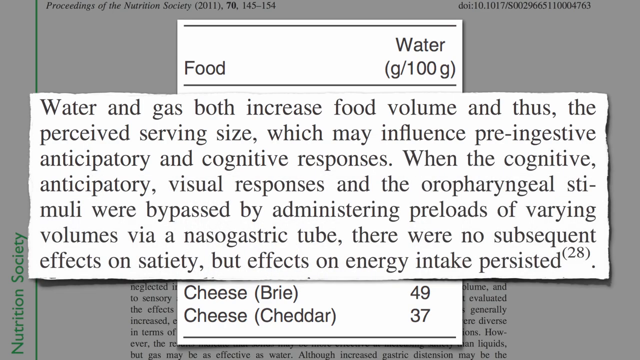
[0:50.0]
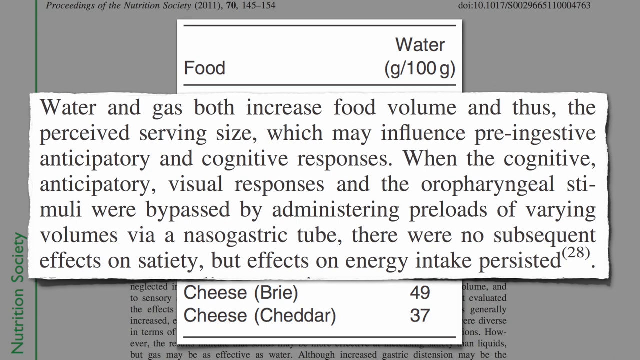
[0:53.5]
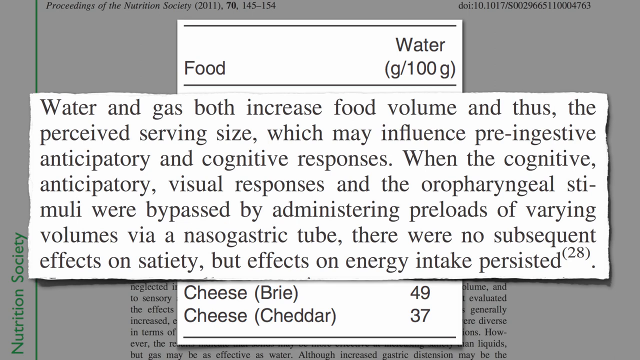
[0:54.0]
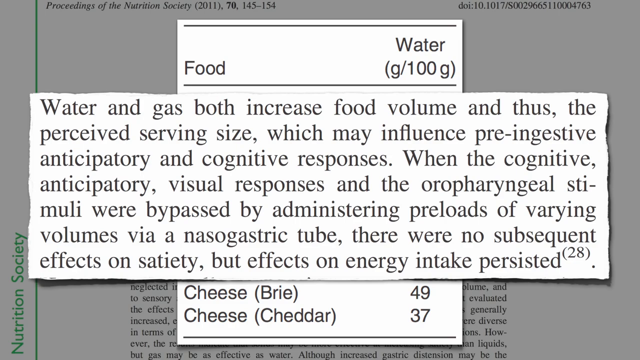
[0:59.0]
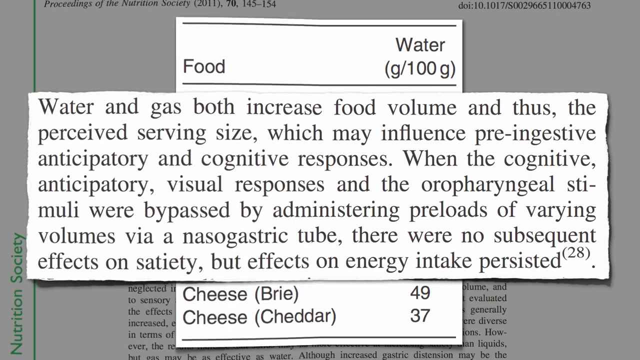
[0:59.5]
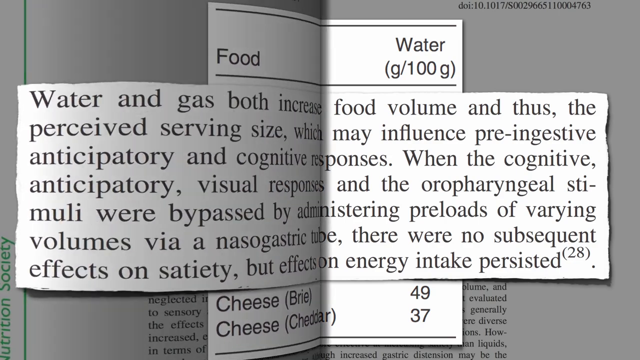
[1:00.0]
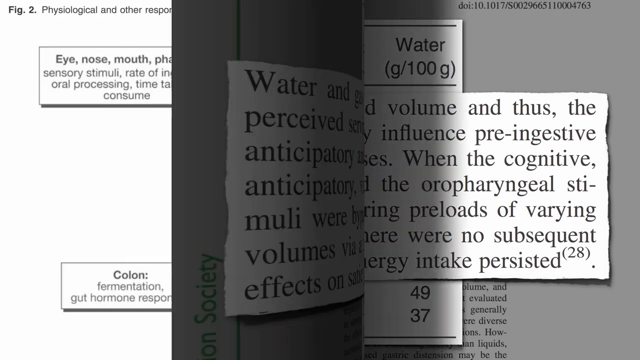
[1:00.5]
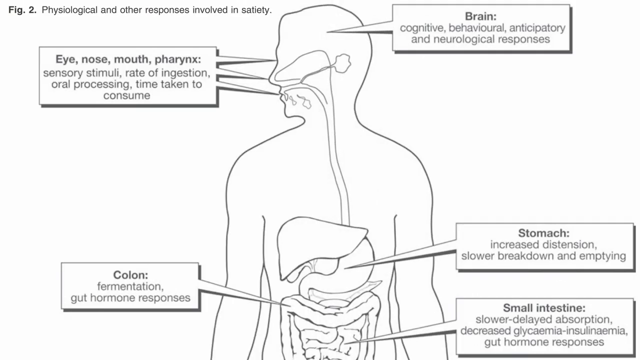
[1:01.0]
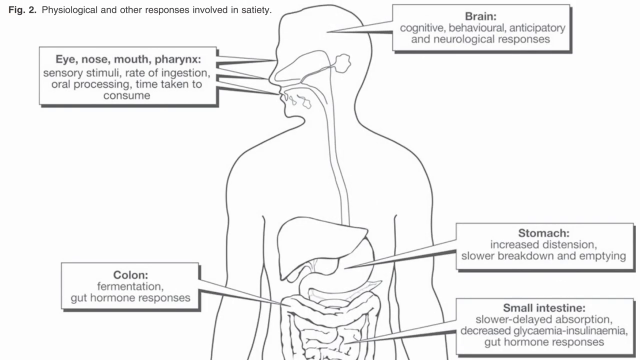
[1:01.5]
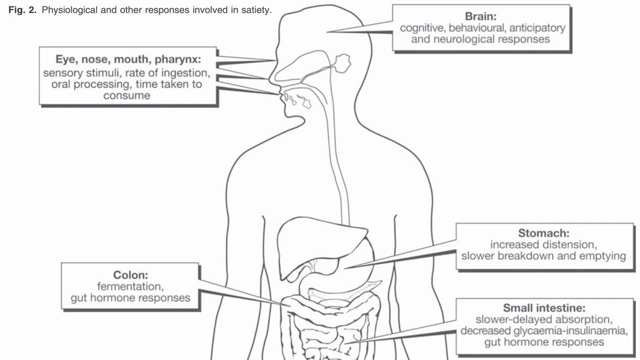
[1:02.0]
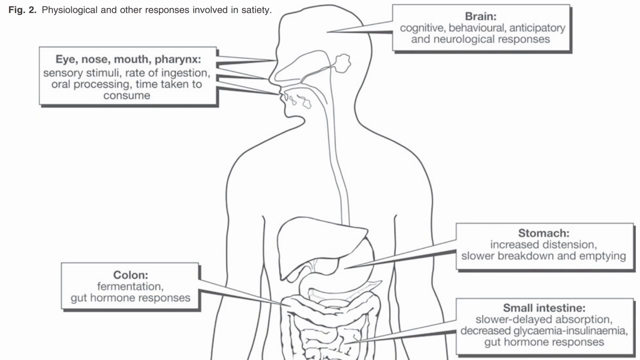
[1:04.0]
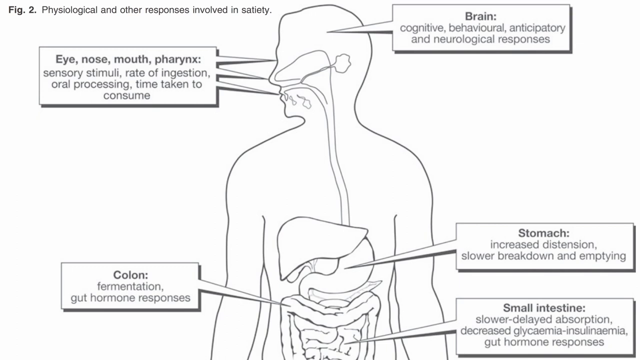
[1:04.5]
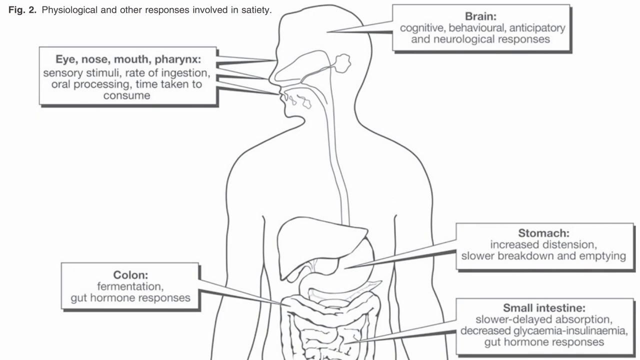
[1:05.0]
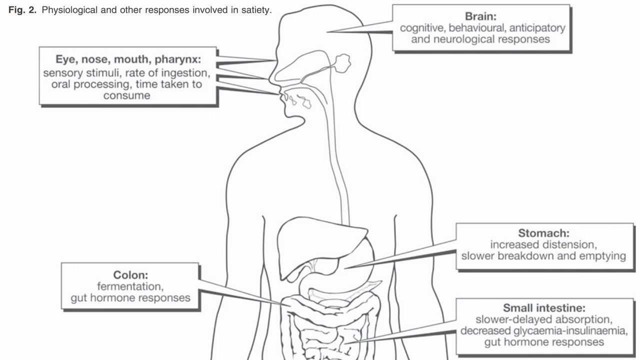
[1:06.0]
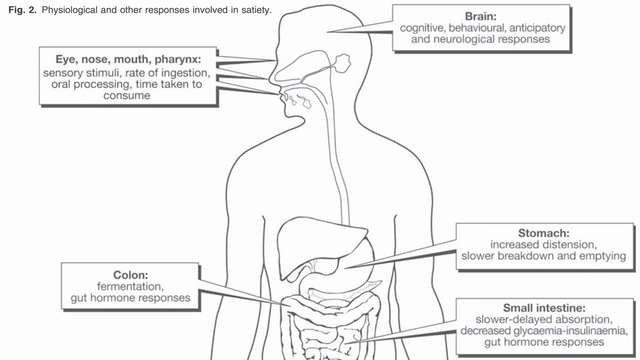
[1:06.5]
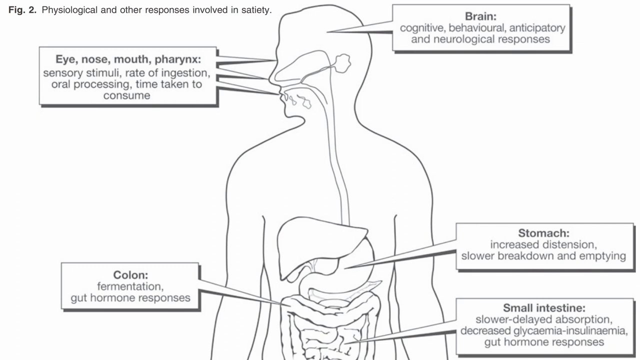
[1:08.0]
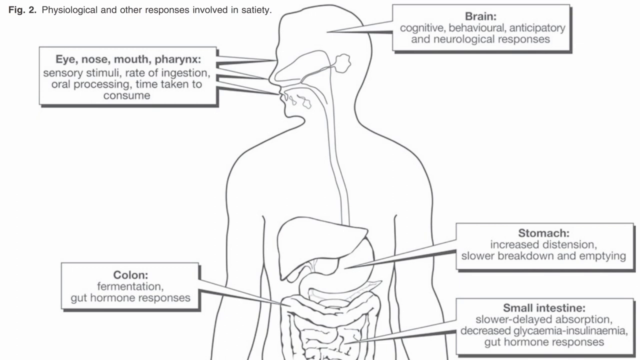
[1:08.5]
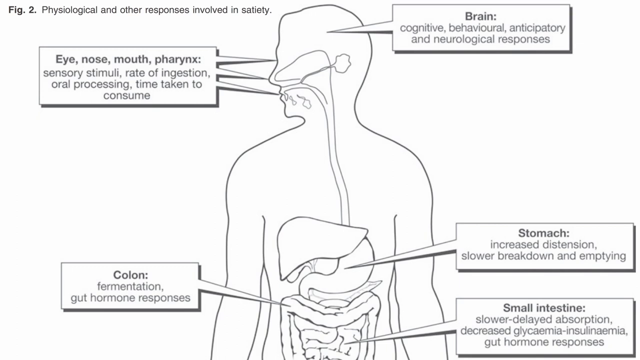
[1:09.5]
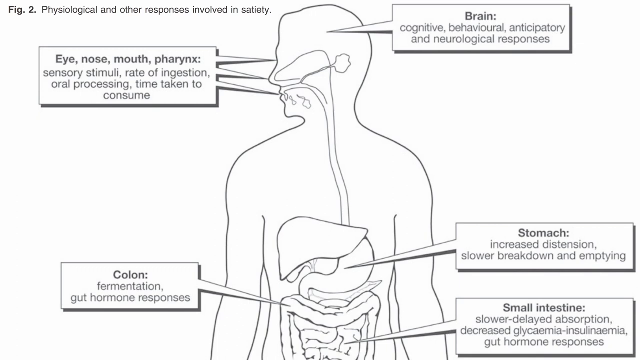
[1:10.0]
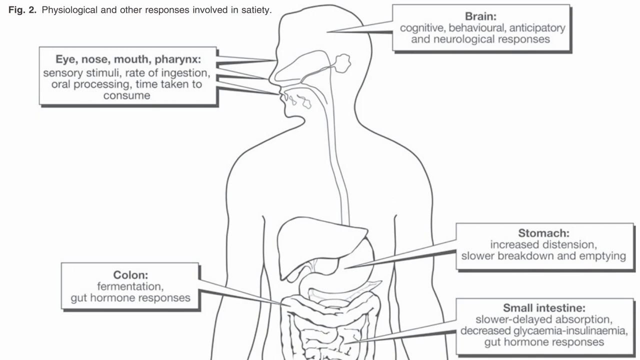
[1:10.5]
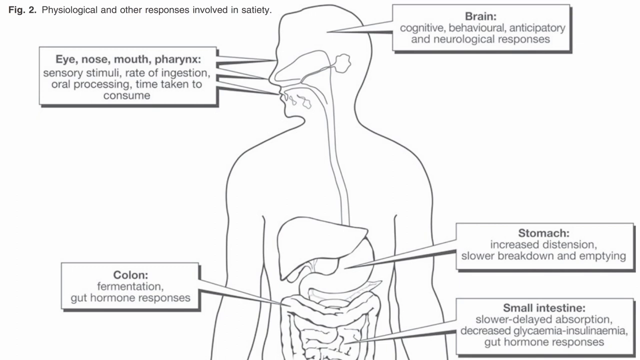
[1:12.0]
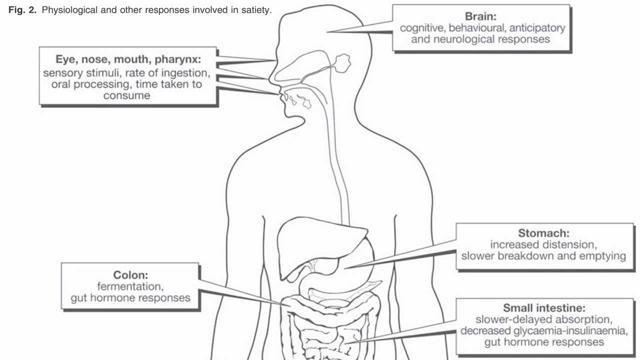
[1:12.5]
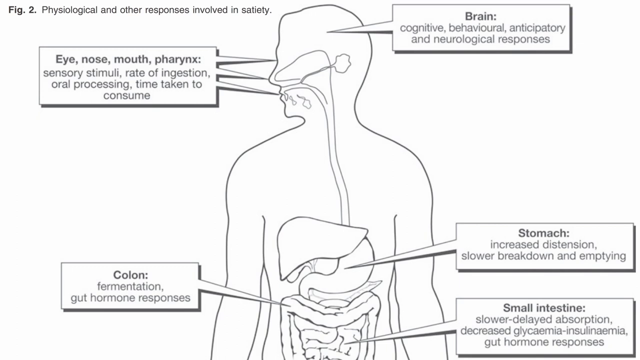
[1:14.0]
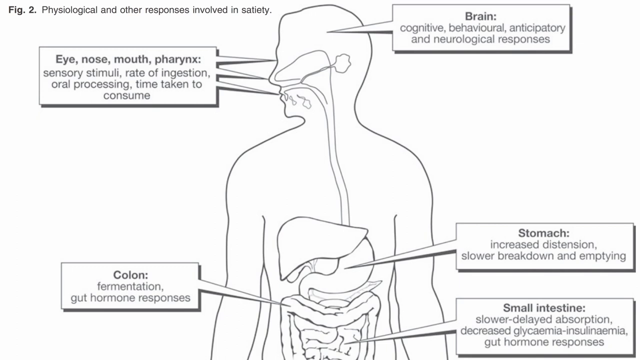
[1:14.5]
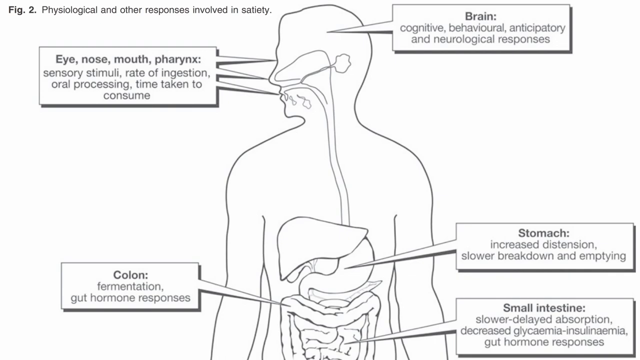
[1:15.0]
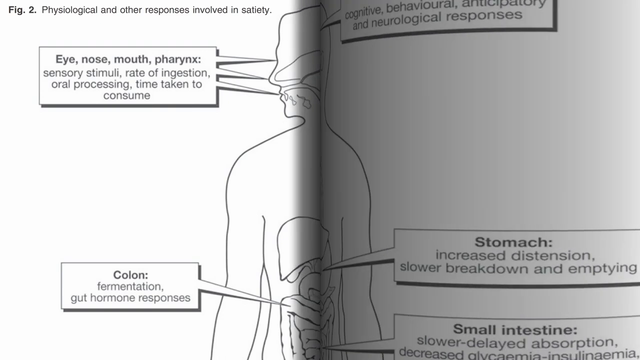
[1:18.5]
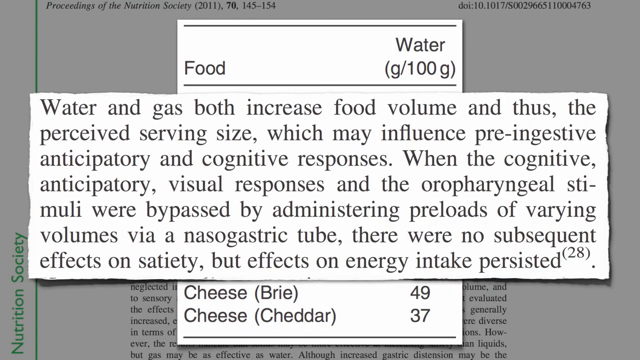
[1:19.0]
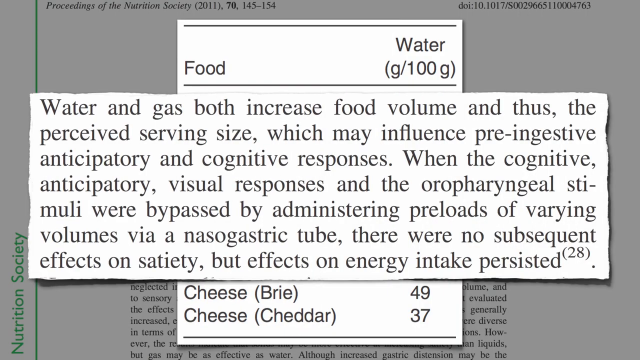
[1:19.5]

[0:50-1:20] Black text on a white background reads: "water and gas both increase food volume and thus the perceived serving size, which may influence pre-ingestive anticipatory and cognitive responses. When the cognitive anticipatory visual responses and oropharyngeal stimuli were bypassed by administering preloads of varying volumes by a nasal gastric tube, there were no subsequent effects on satiety, but effects on energy intake persisted." The screen then changes to an illustration of a human showing their insides, with a stomach, intestines and a few other organs visible. At the top right, next to the head, a bubble reads "Brain, Cognitive, Behavioral, Anticipatory, and Neurological Responses." A bubble on the left reads "Eye, Nose, Mouth, Pharynx, Sensory Stimuli, Rate of Ingestion, Oral Processing, Time Taken to Consume." At the very top left is the text "figure two, physiological and other responses involved in satiety."